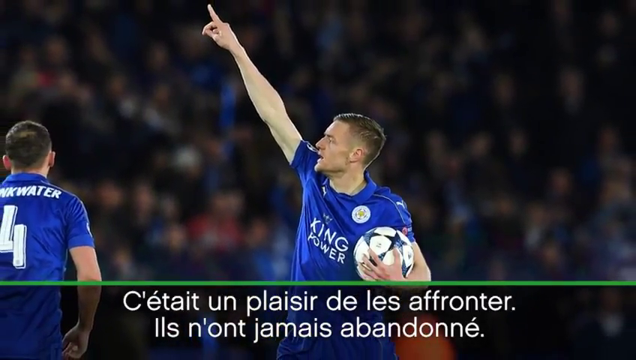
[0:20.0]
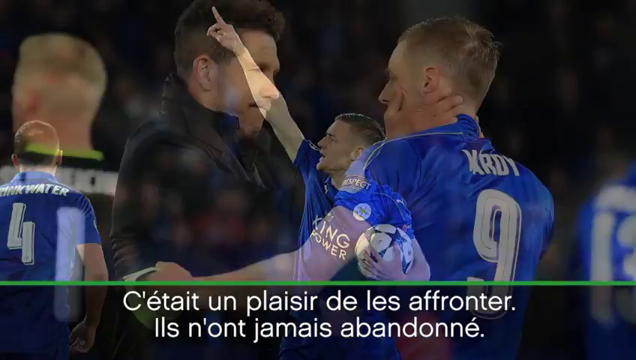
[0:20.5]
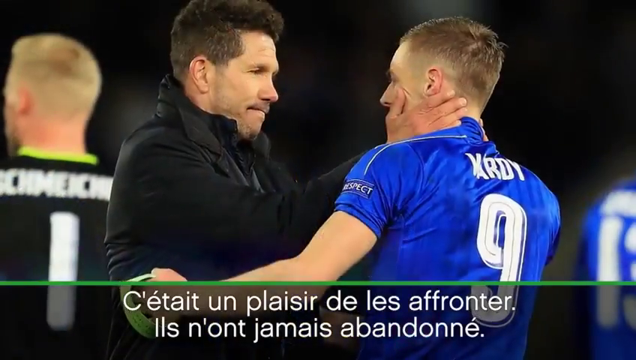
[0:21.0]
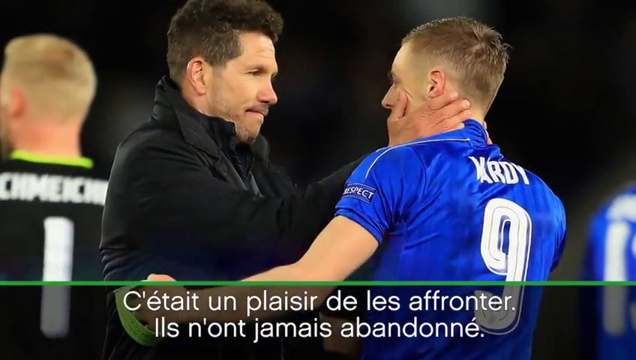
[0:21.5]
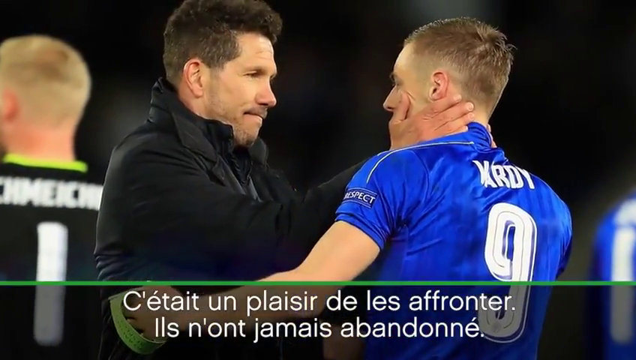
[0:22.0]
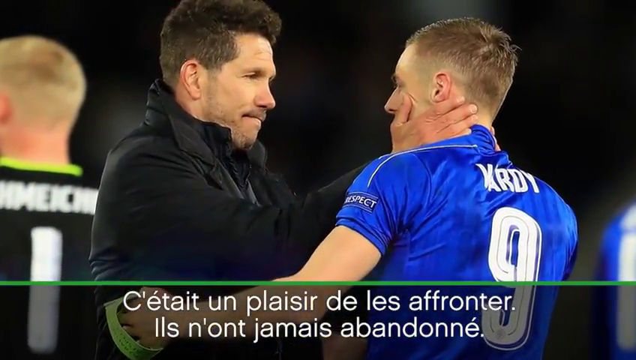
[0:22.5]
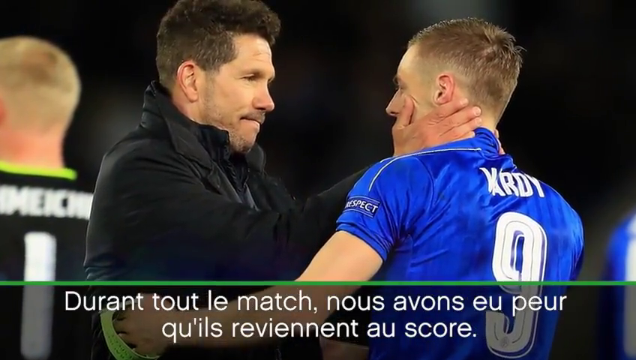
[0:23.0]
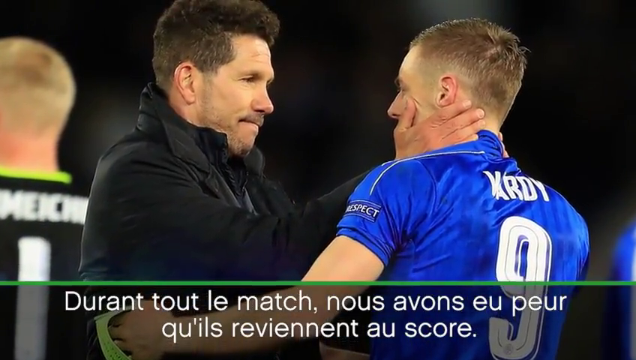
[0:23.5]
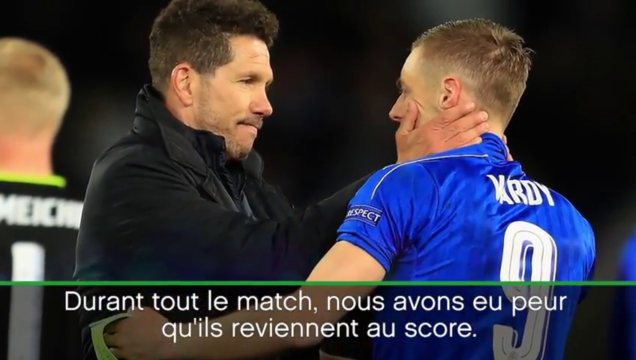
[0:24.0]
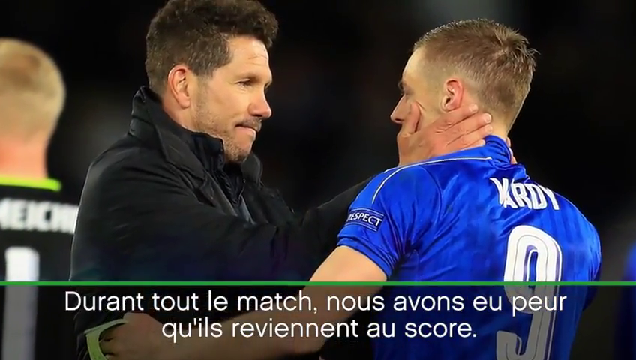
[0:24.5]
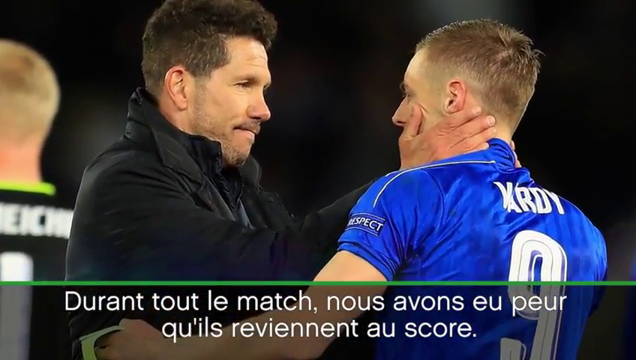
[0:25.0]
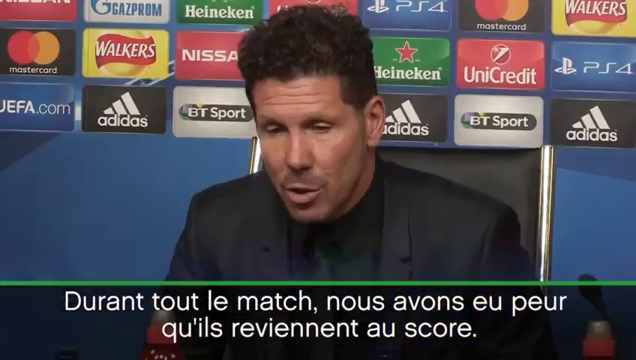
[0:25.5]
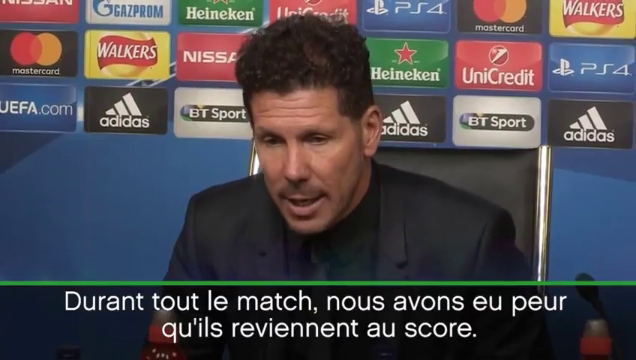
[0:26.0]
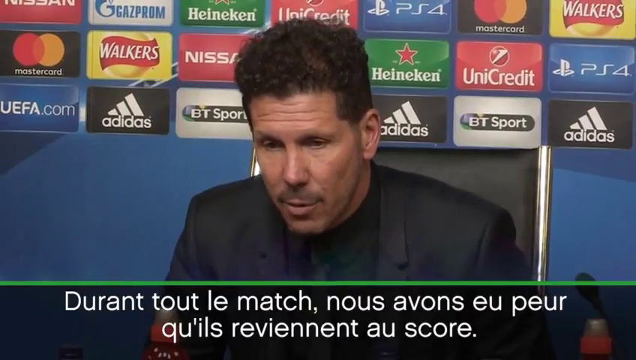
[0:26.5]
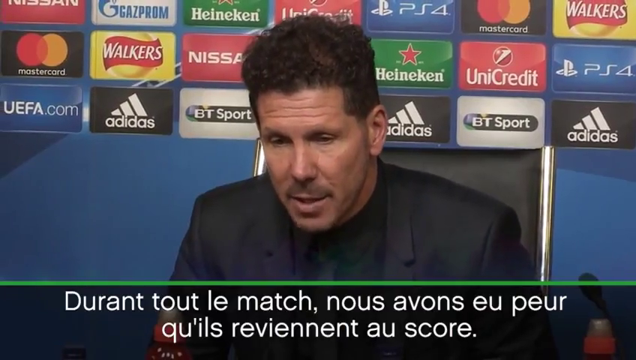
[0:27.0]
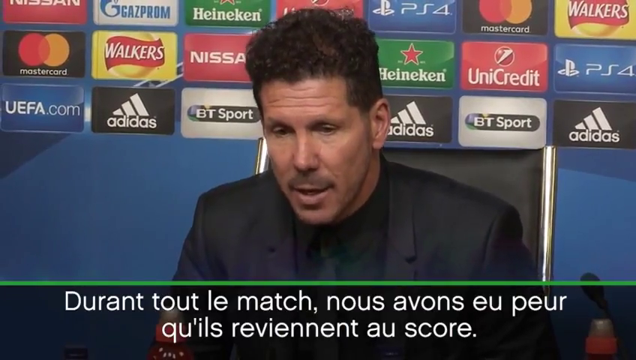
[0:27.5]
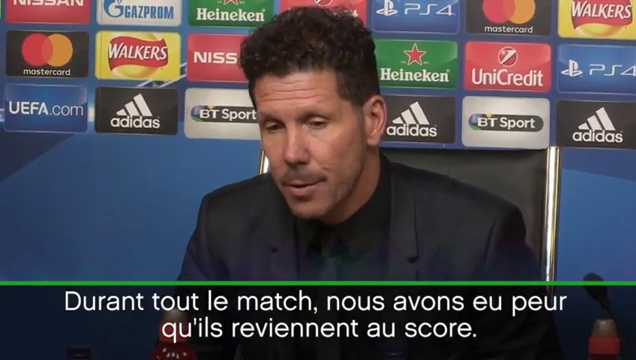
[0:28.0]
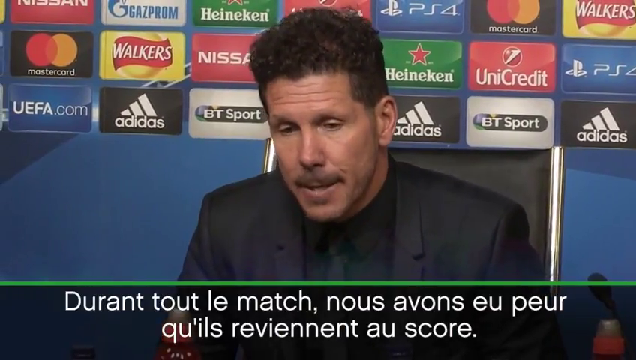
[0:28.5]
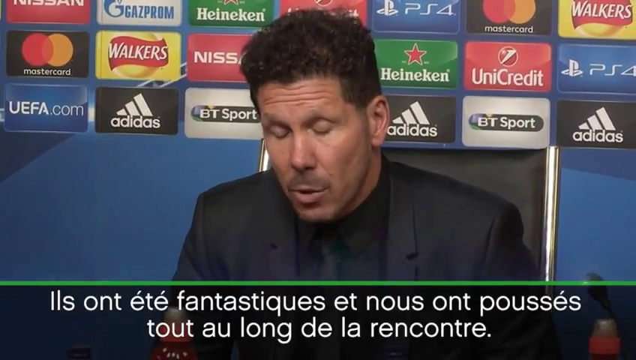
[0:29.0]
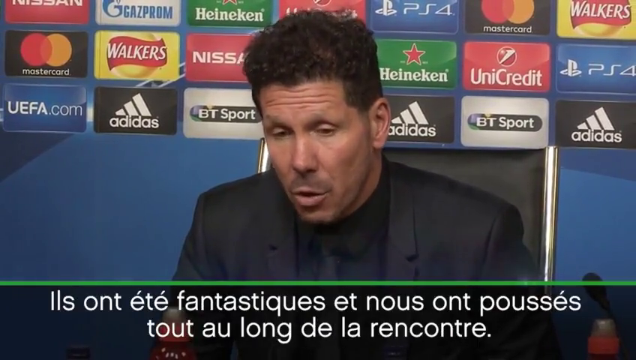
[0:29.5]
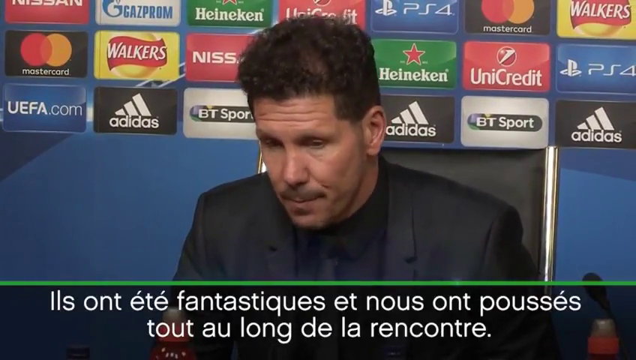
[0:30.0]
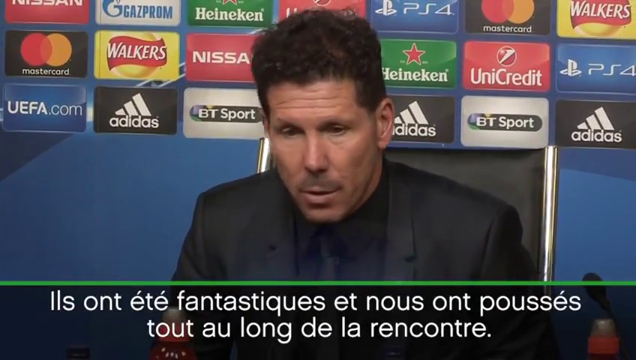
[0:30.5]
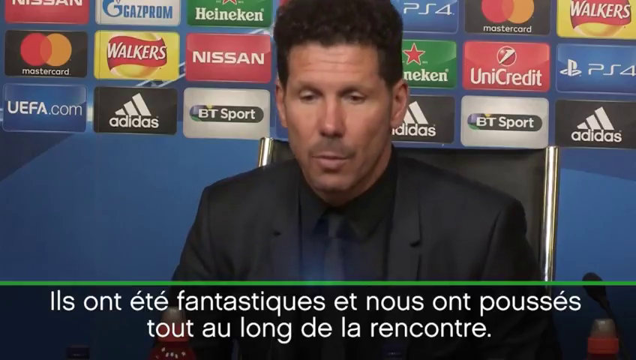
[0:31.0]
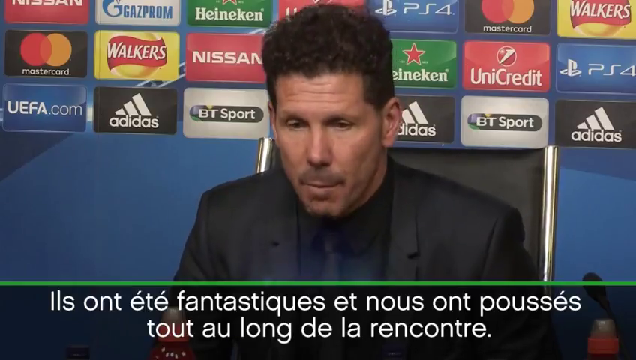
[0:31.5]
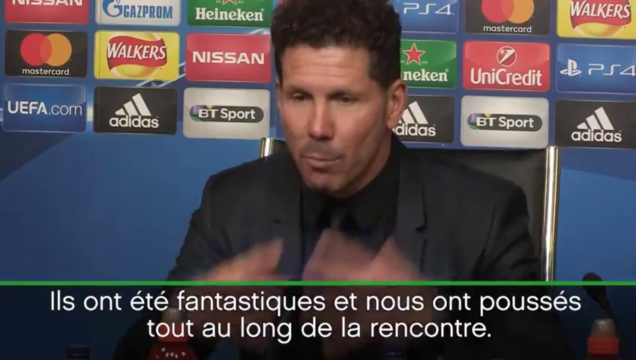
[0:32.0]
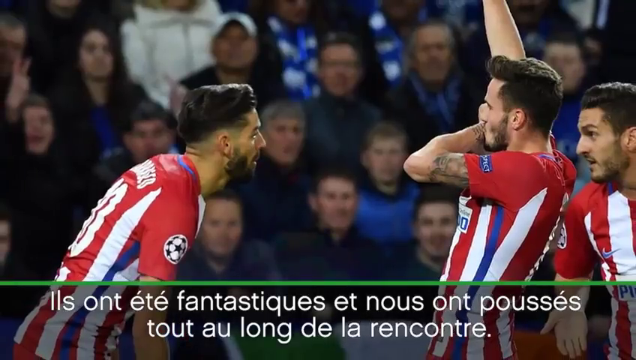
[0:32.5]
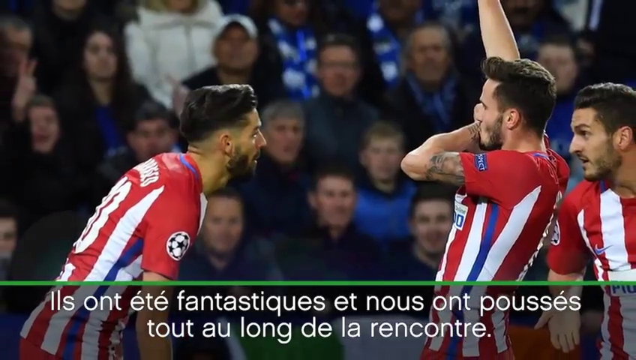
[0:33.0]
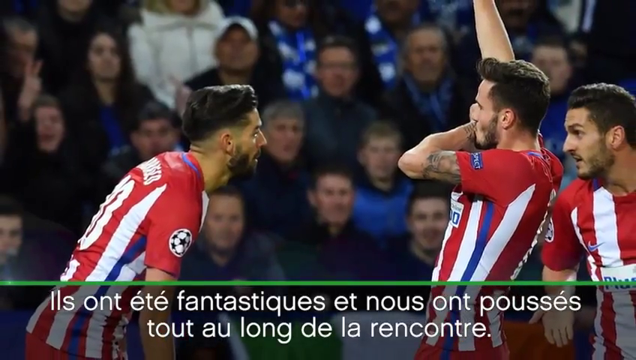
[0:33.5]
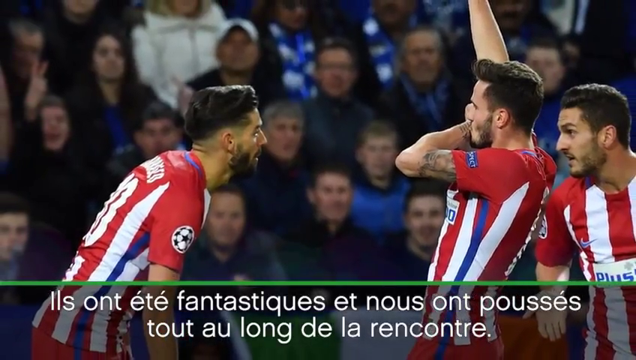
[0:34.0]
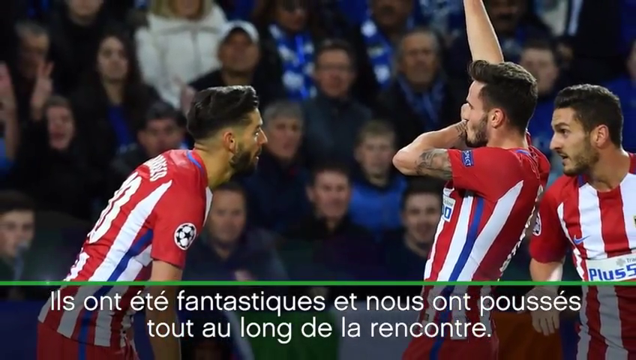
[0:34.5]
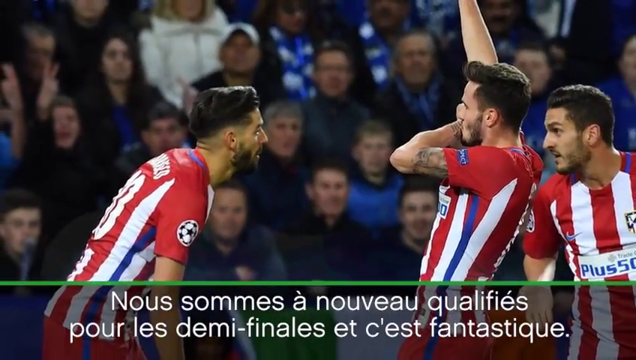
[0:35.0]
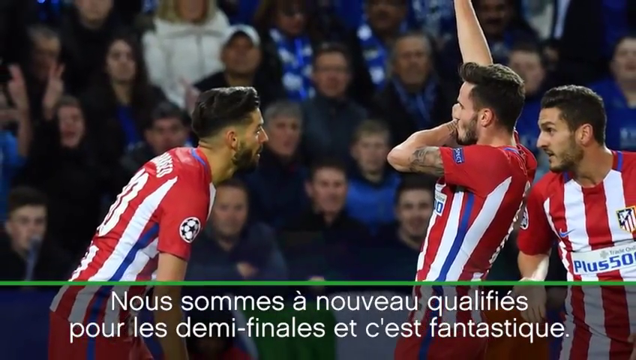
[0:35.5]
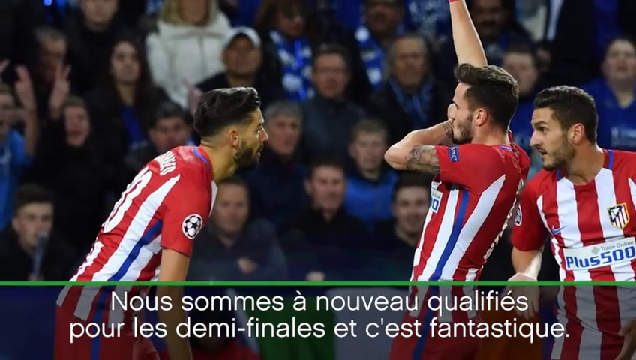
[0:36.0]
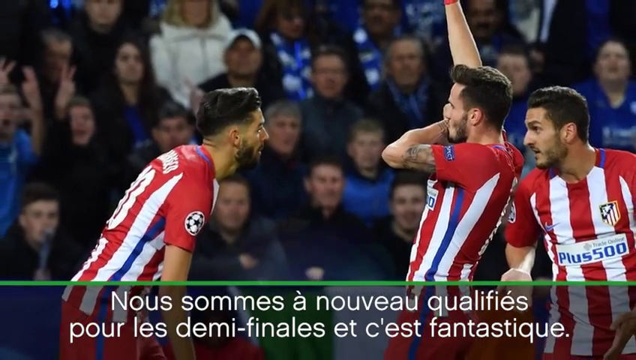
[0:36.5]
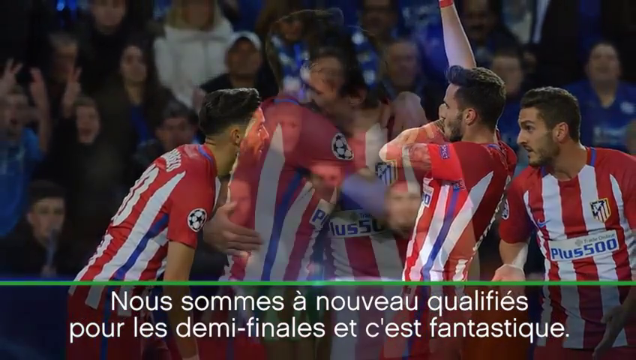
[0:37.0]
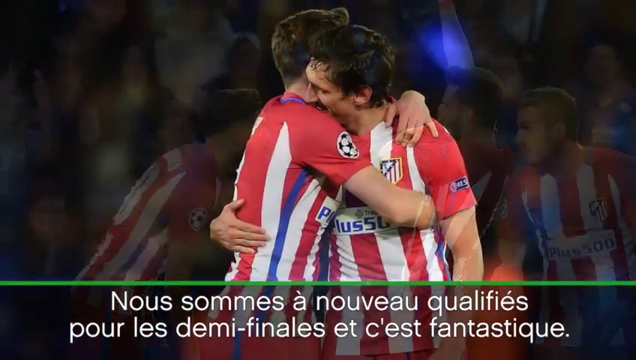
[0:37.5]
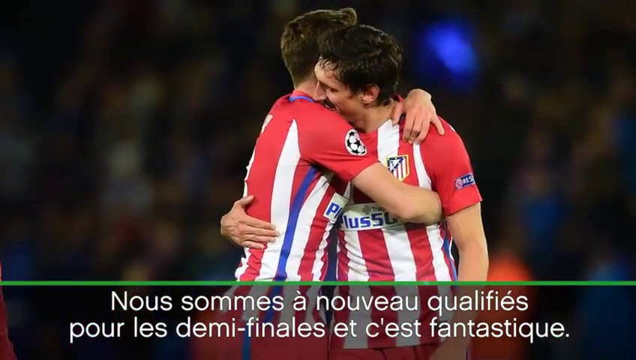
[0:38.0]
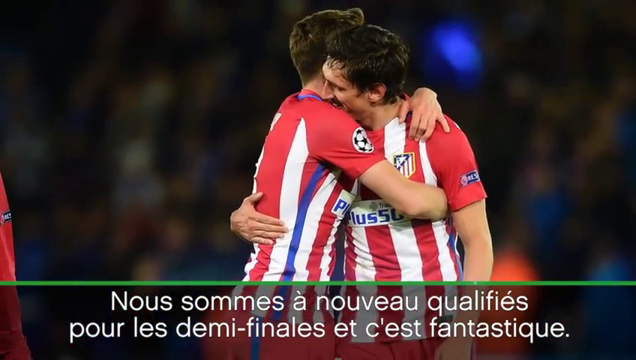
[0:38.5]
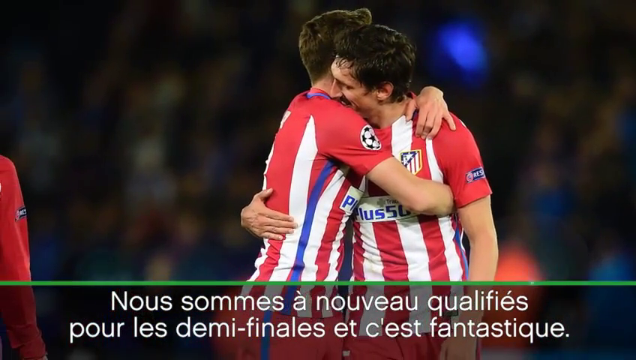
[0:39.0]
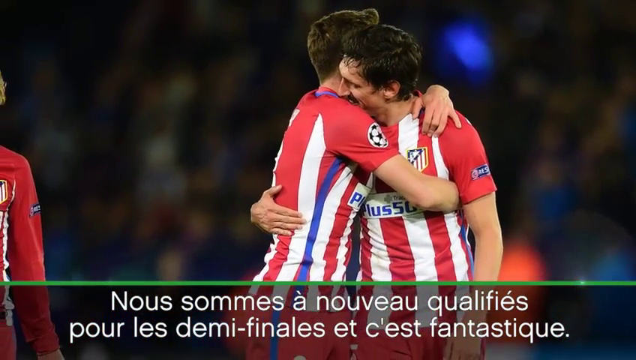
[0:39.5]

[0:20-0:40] Jamie Vardy is in the centre of the screen wearing a blue Leicester City football kit, holding one arm and finger up in the air and a football under his other arm. On the left side of the screen is the back of another player, with the words "drink water" and the number 4 on his back. The image cuts to a picture of Diego Simeone and Jamie Vardy hugging, and the screen zooms in on both their faces. It cuts back to Diego Simeone, sitting in the press conference and talking to the screen, with advertising boards behind him that include uefa.com, adidas and btsport. Next comes an image of three Atletico Madrid players on the pitch with the crowd visible in the background; one is kissing a tattoo on his inner wrist while the other two run toward him. The view zooms out so the picture is seen from a distance. Then there is an image of Atletico Madrid players hugging on the pitch.